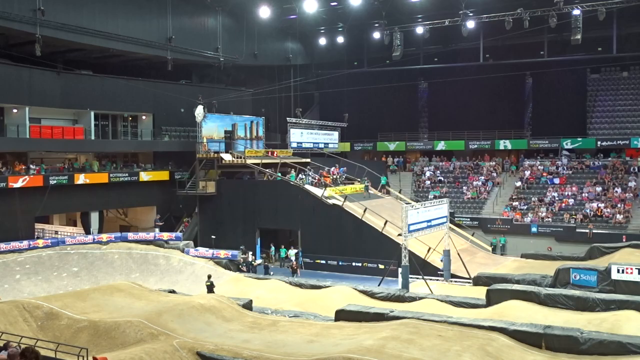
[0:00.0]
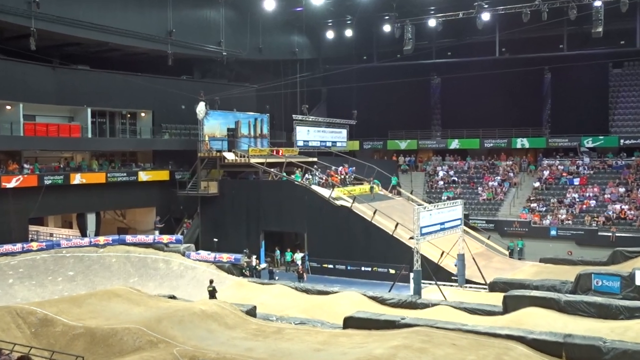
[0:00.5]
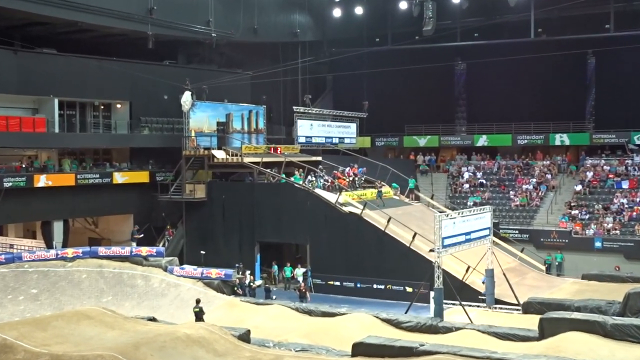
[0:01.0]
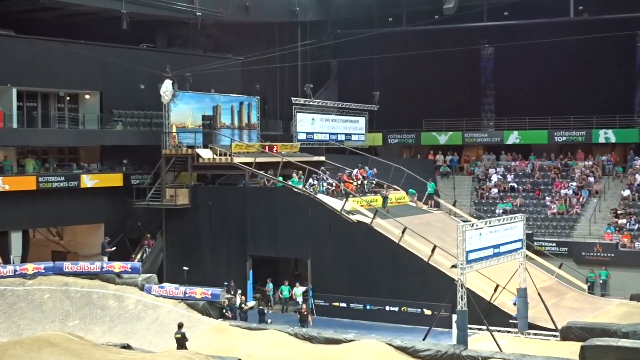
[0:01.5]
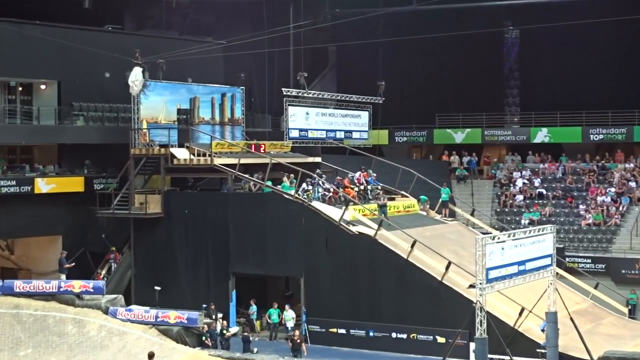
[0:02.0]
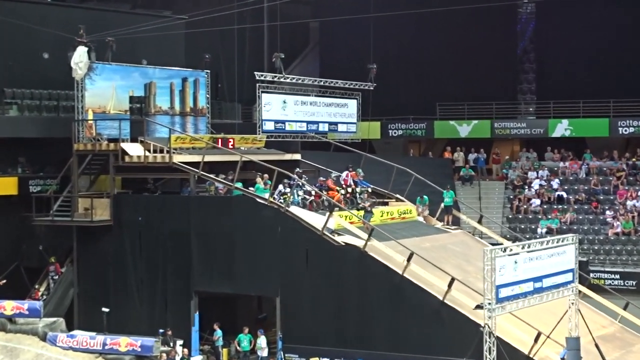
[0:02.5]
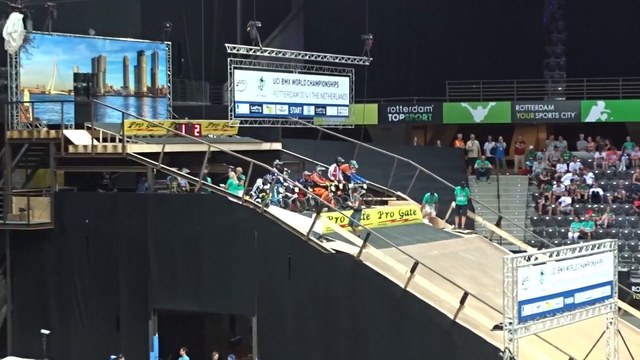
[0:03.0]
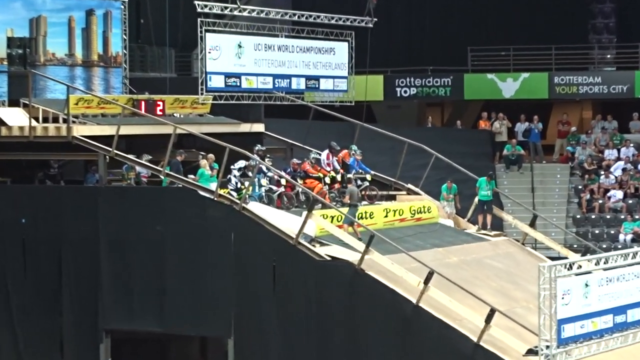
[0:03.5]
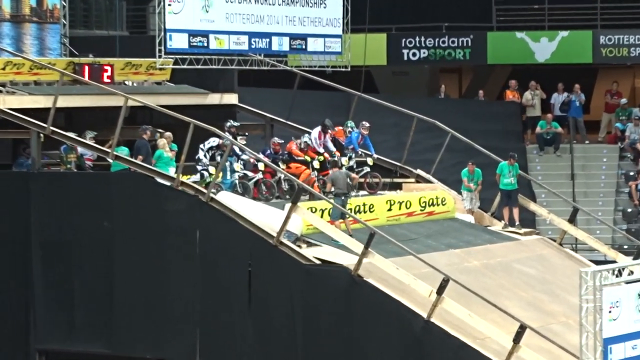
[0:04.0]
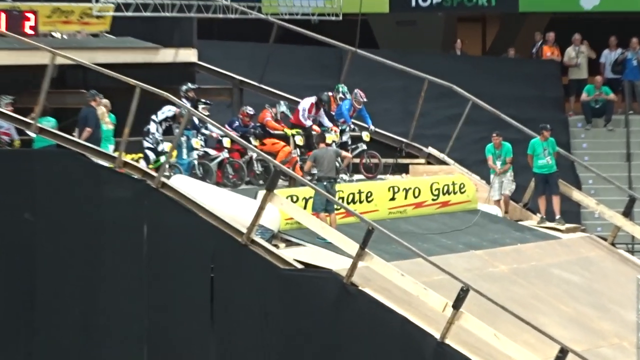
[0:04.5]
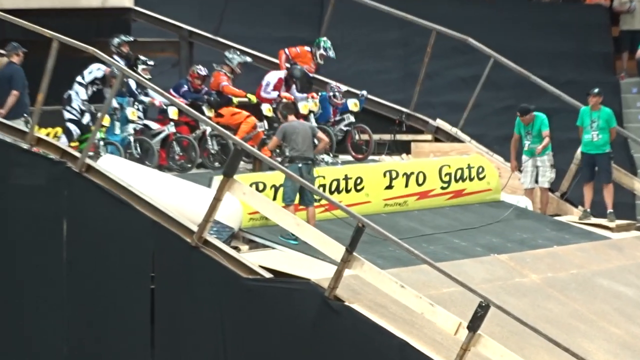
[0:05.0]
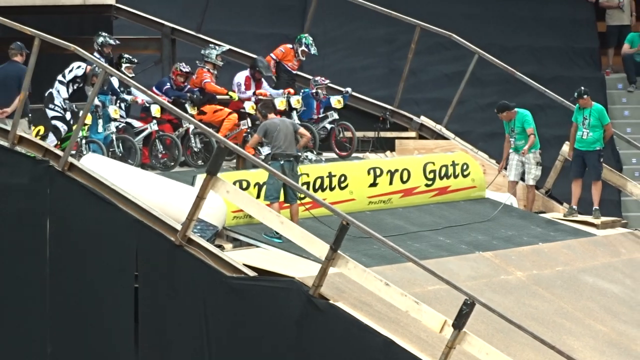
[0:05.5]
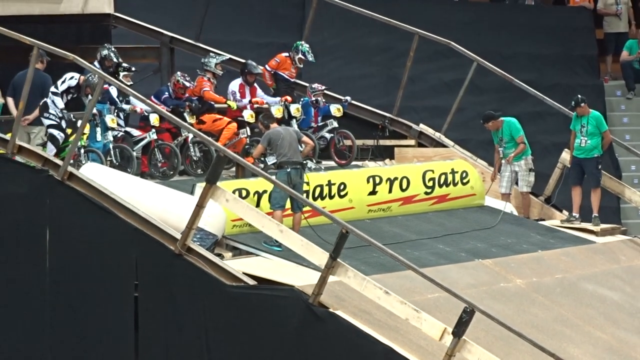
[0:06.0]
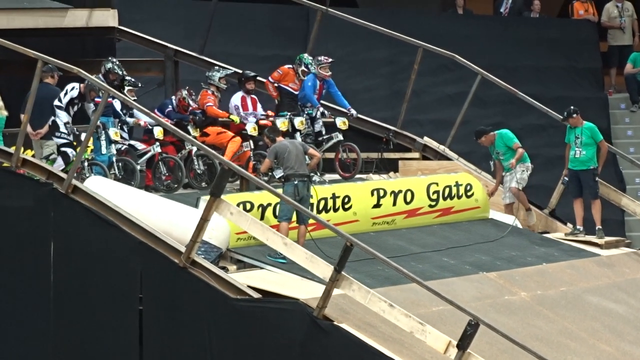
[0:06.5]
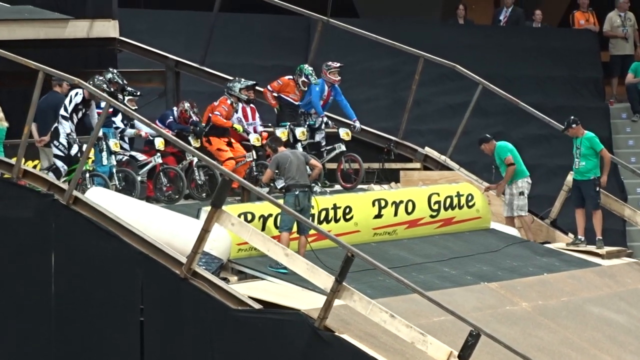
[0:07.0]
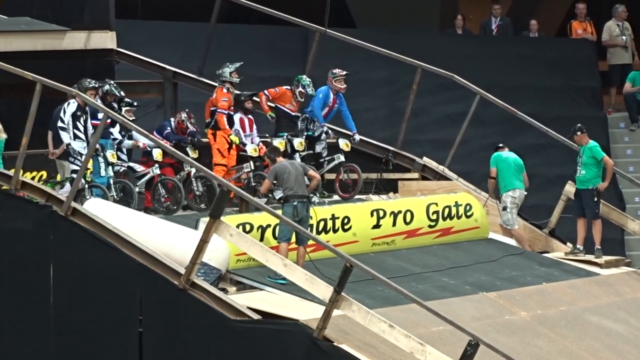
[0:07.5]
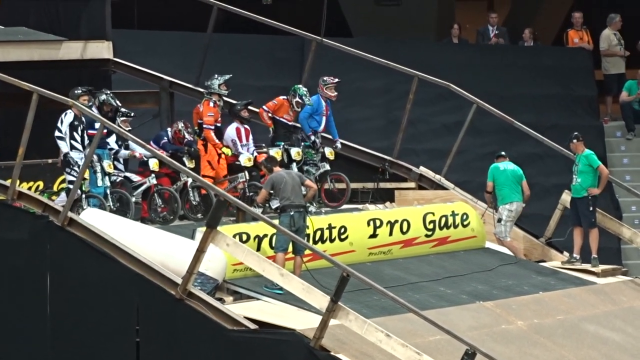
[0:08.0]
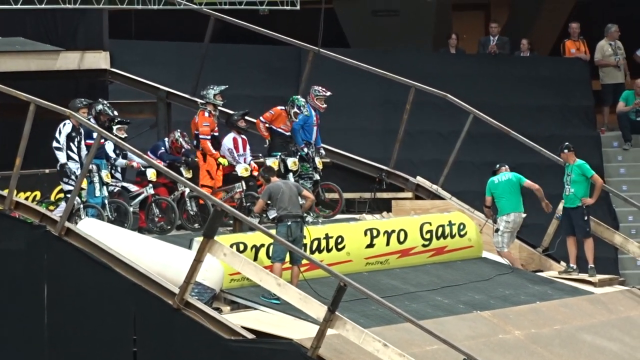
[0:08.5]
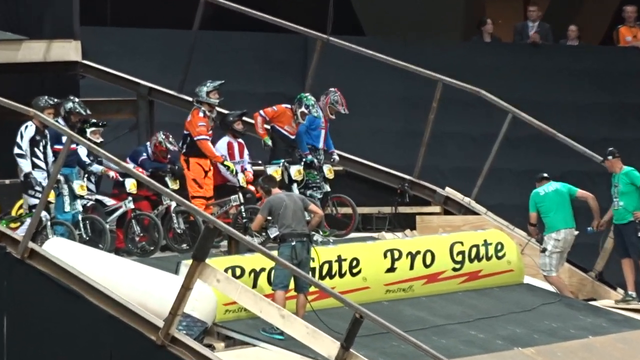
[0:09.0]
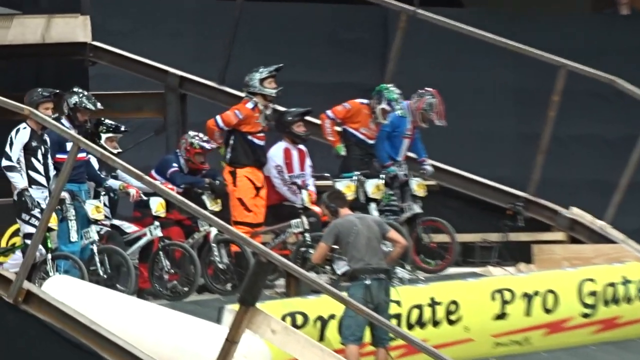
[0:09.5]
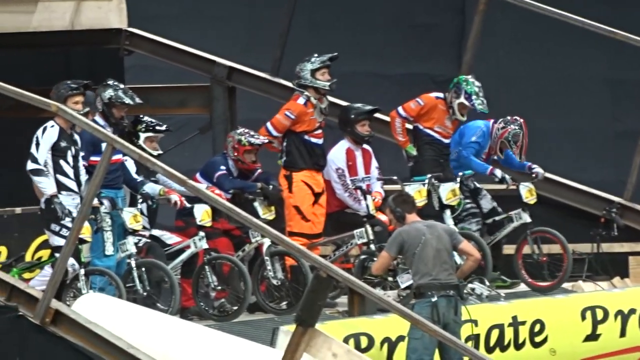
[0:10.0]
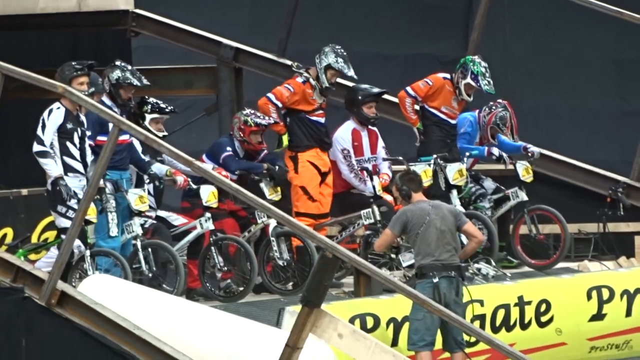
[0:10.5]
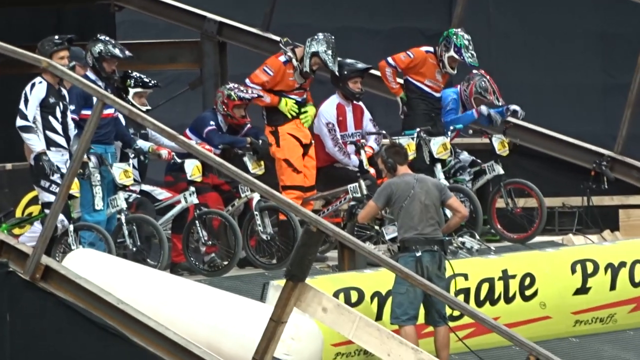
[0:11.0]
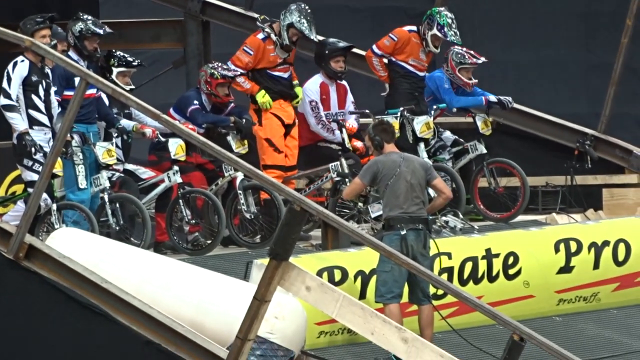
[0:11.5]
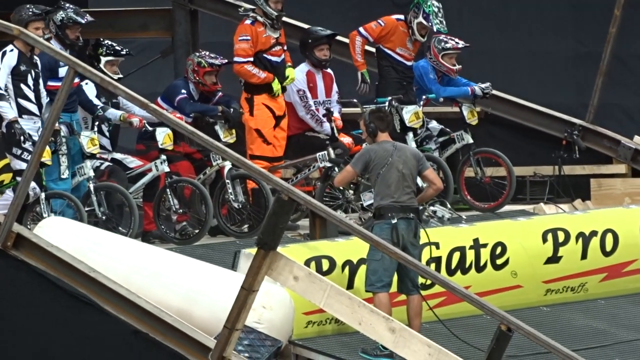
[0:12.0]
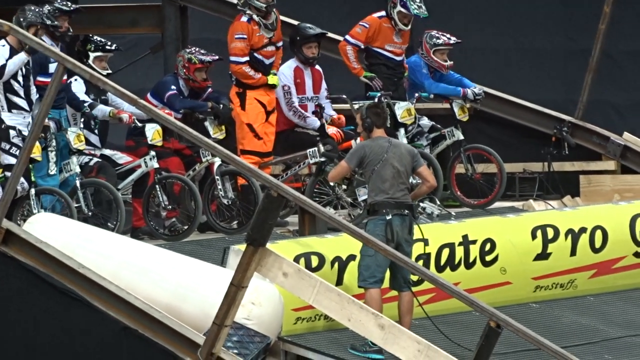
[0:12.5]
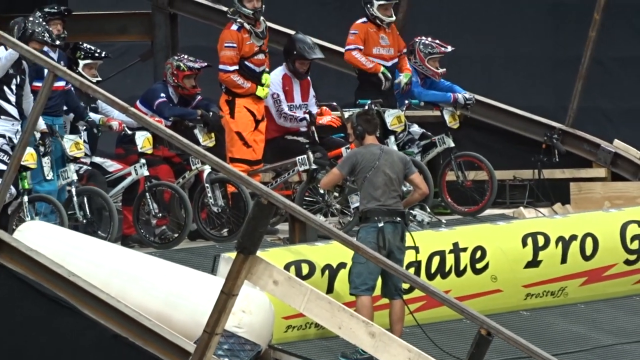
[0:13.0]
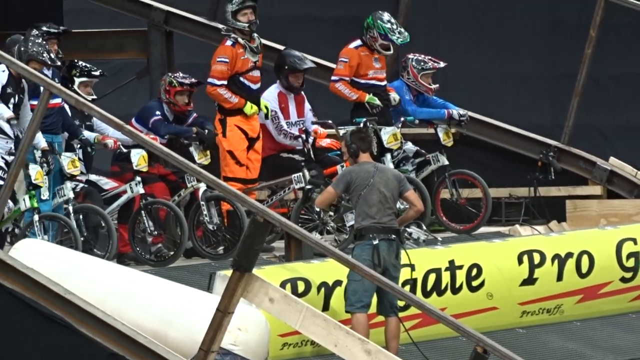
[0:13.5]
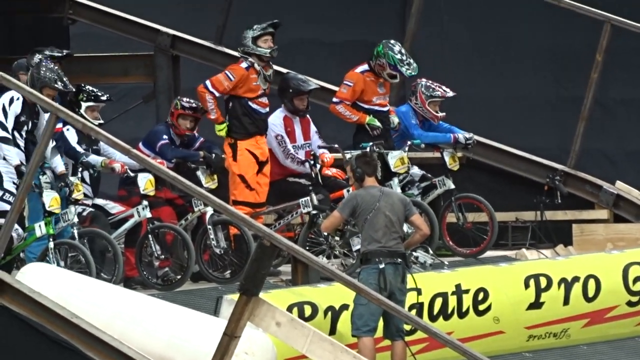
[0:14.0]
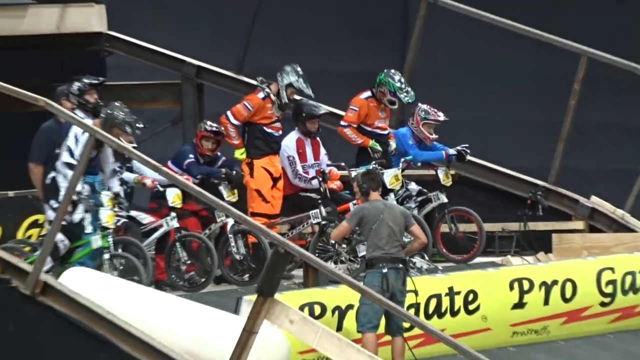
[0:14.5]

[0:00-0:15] A group of people on bikes appears to be at the top of a hill, getting ready to race down it. There are about ten bikers, and they are tucking in their shirts and preparing. The setting looks like an indoor racetrack, apparently called the Pro-Gate, possibly a championship bike race. Other people on the racetrack also appear to be getting ready to race. Some people seem to be in the bleachers, with a multicolored banner in front of the bleachers.